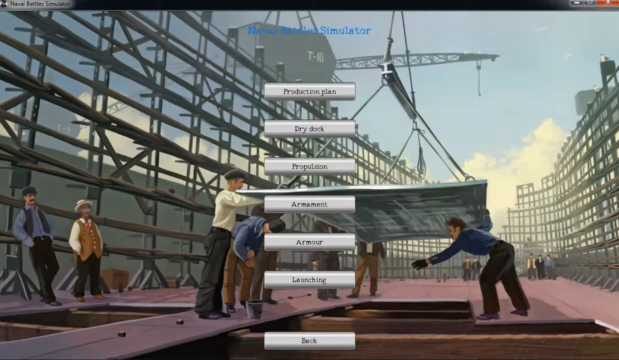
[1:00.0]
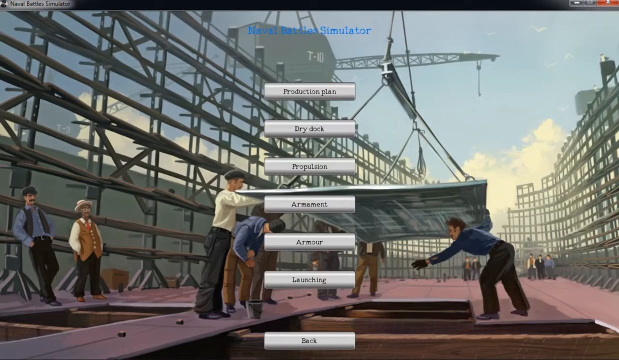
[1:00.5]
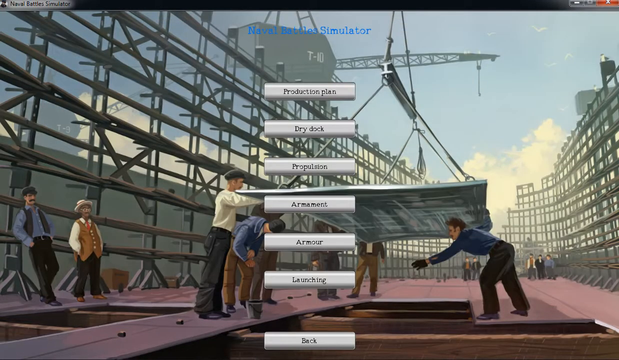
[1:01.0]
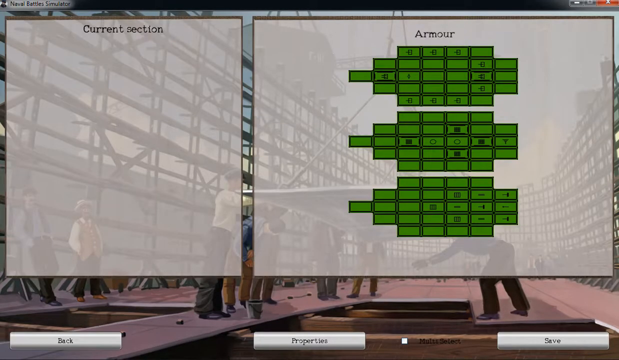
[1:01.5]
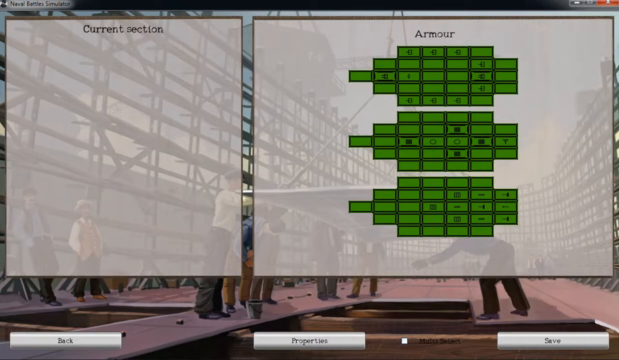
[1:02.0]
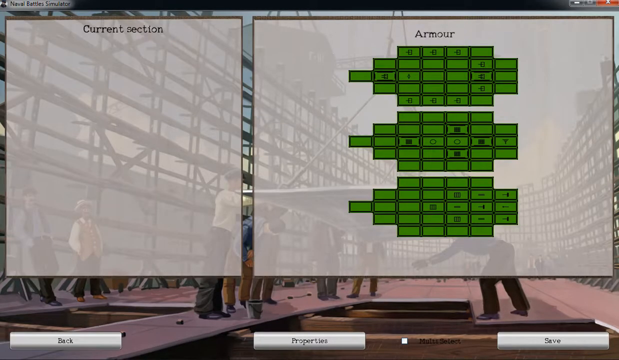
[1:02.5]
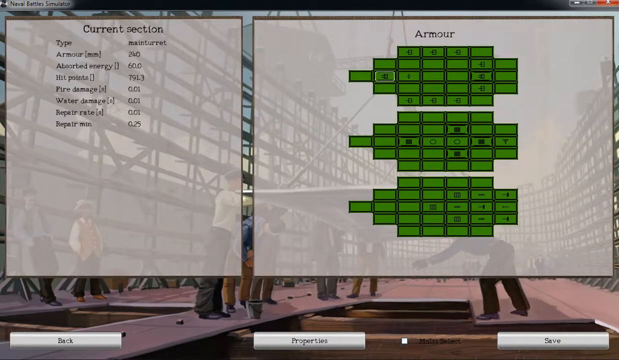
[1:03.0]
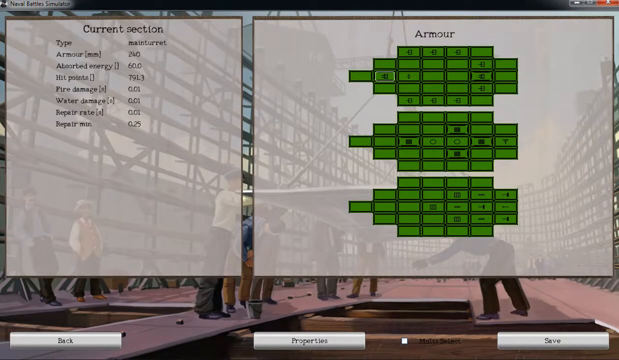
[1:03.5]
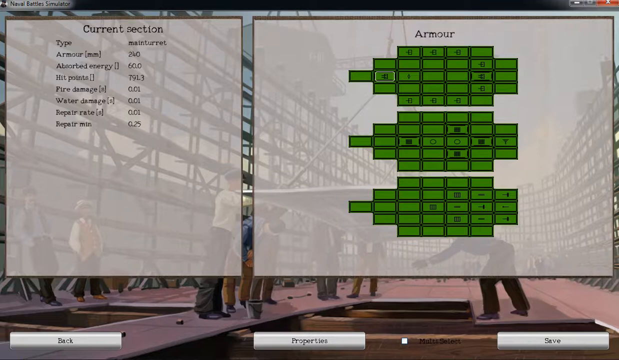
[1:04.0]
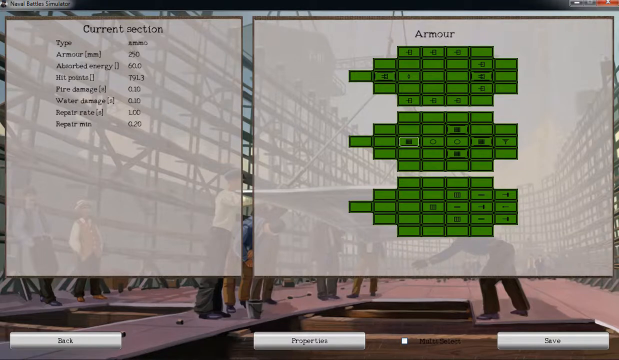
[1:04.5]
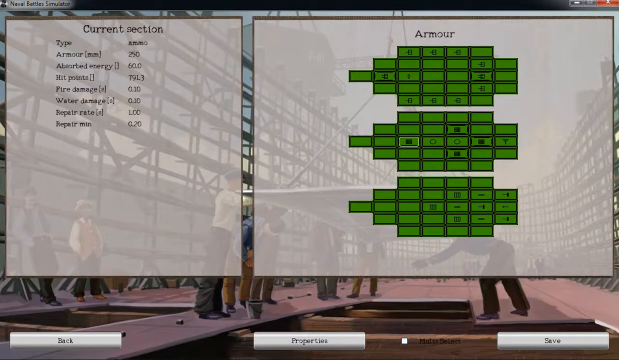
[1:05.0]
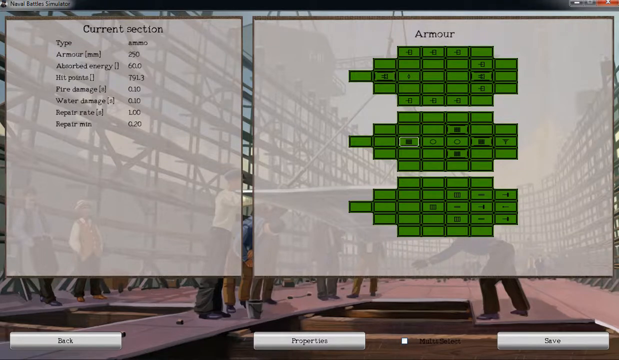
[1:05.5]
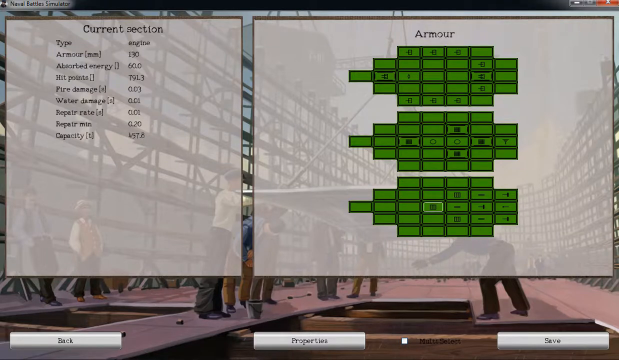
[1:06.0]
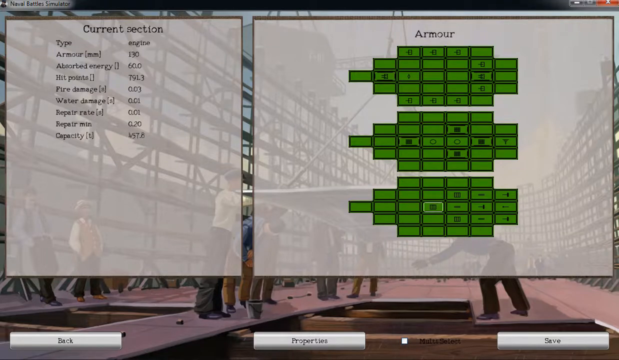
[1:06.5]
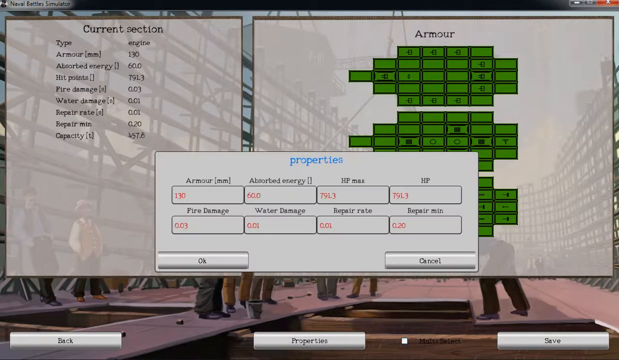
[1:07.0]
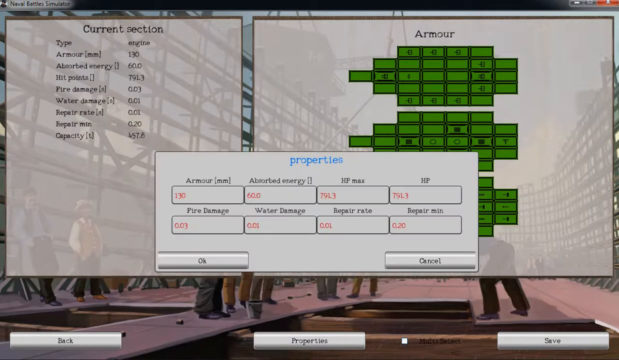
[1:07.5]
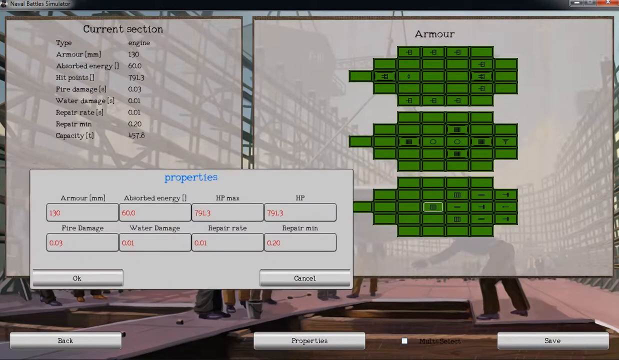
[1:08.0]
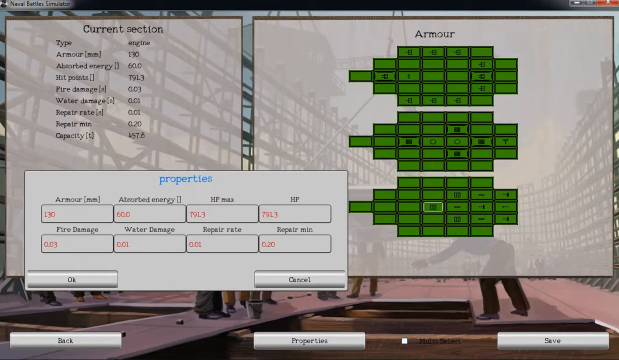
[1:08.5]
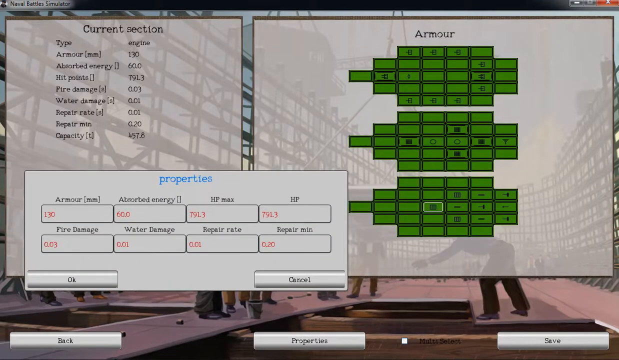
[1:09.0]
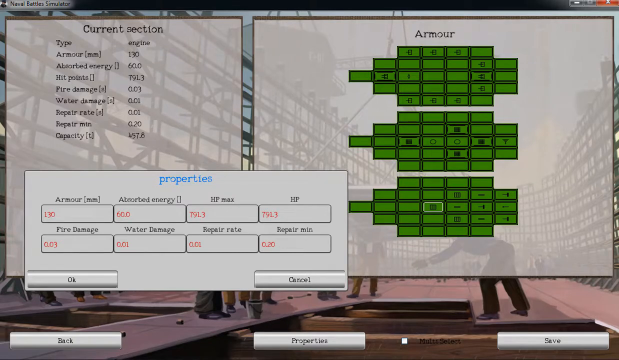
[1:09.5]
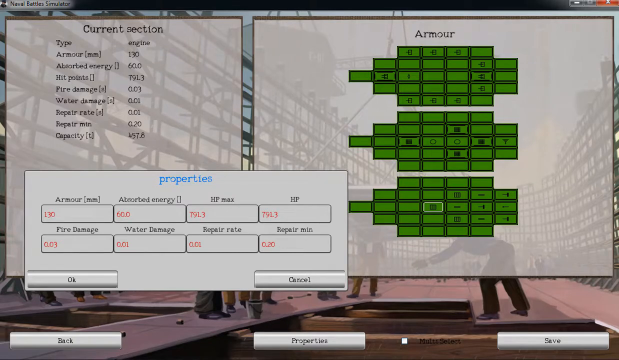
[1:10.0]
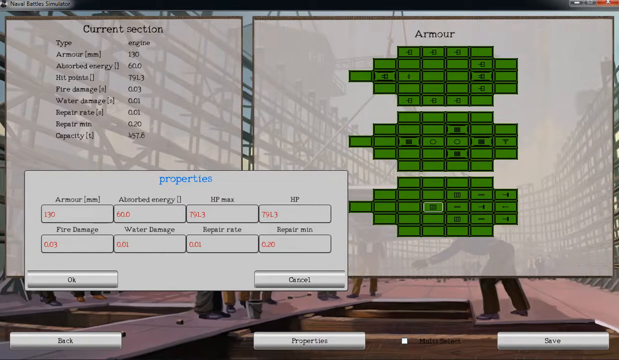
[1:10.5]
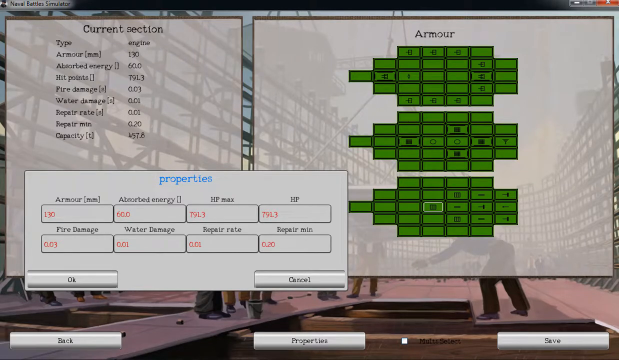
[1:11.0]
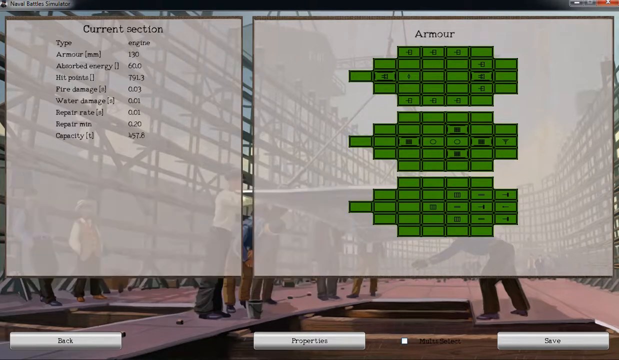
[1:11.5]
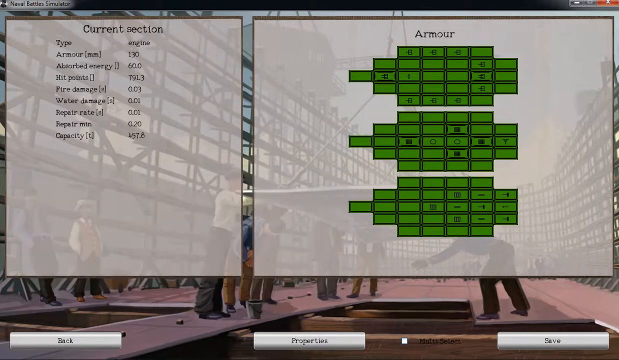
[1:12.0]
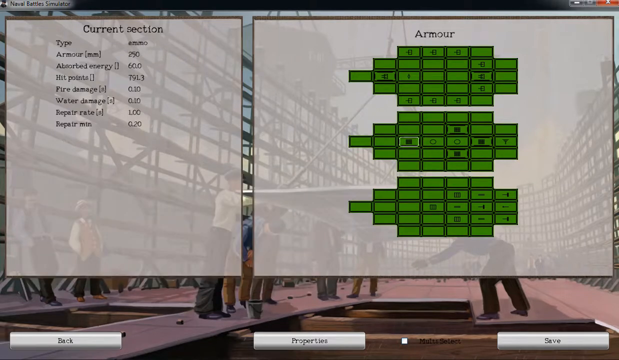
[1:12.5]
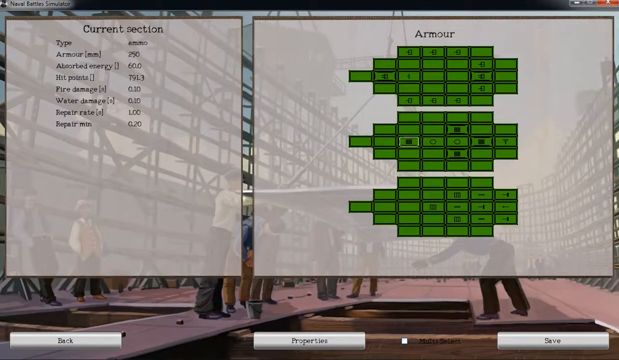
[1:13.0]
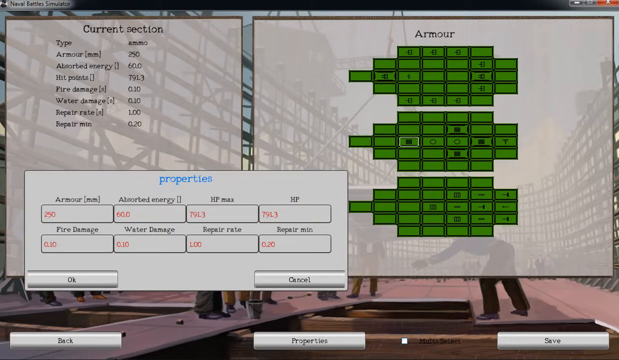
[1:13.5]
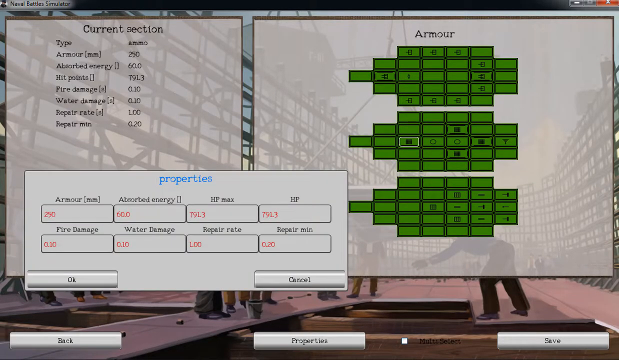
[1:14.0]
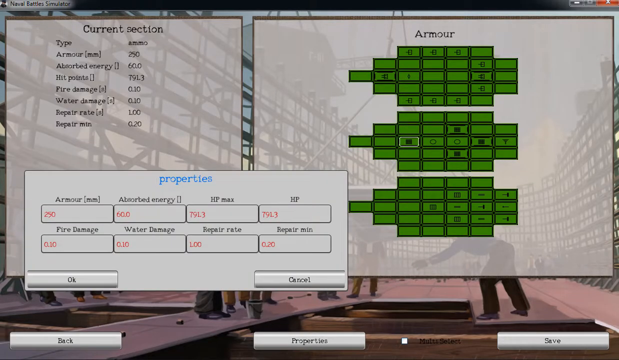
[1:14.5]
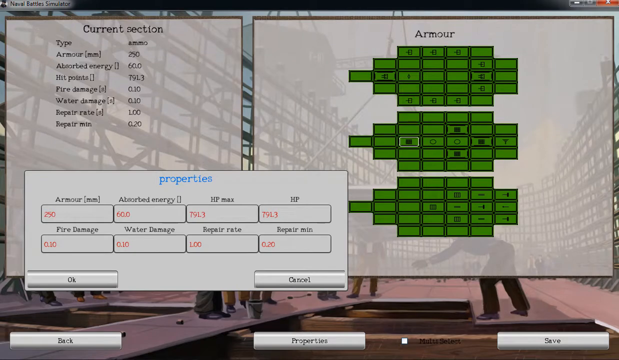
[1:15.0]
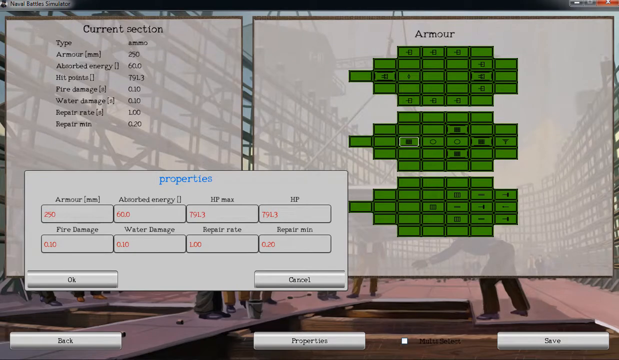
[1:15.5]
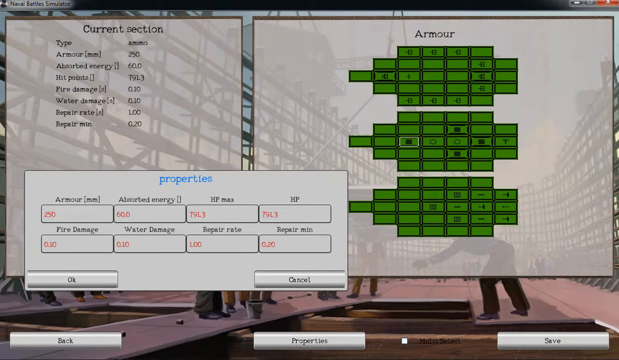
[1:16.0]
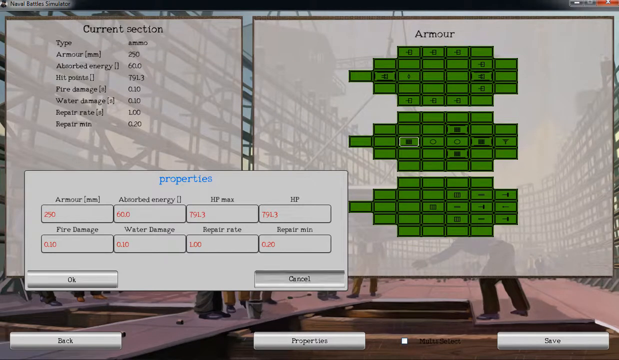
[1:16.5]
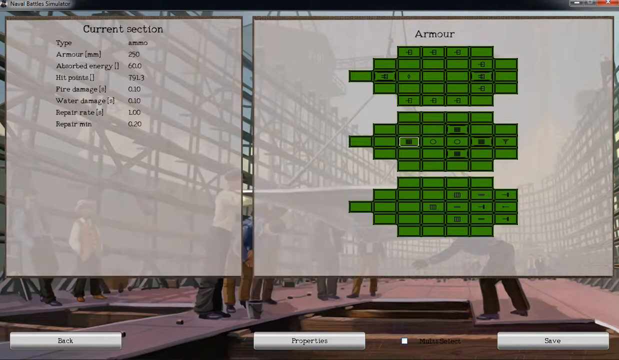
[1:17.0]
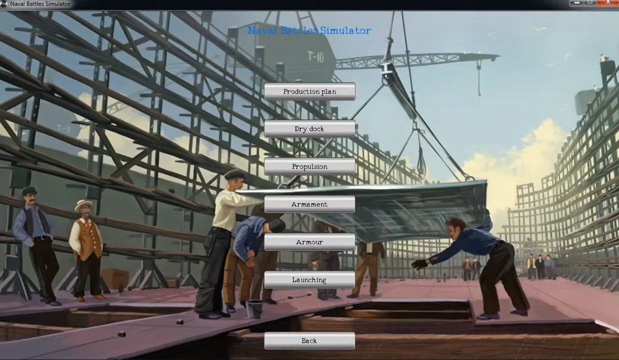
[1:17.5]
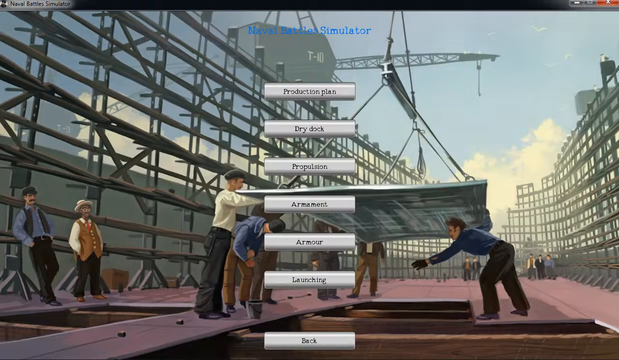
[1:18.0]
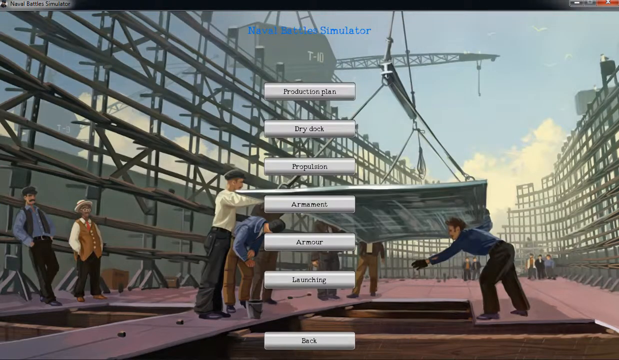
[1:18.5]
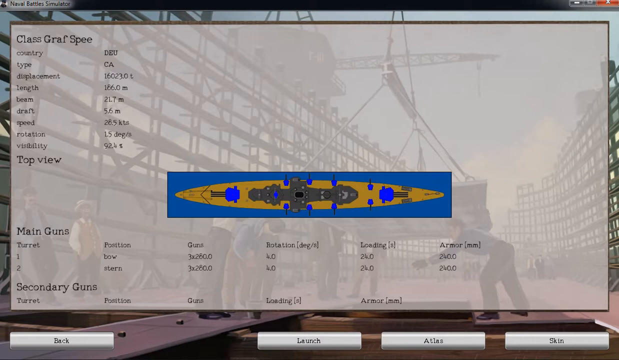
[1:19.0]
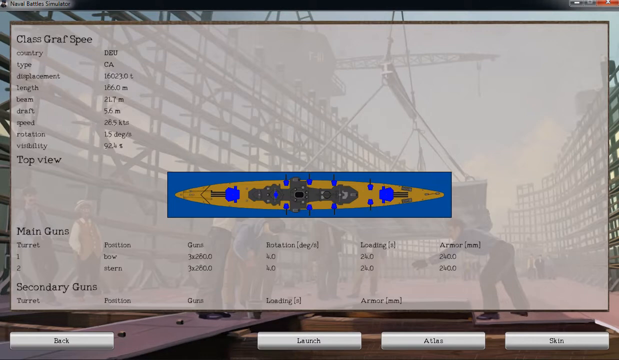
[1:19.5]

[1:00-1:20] A white screen shows very big blocks of small green rectangular shapes. They look like little pieces of money, but they could be the outline of a boat, a boat blueprint. They are on an off-white background, with a big rectangular box to the left and one to the right, with black letters written in the box. The person moves the mouse all around the screen. A big gray box comes up with red letters, eight little rectangular boxes, and blue words at the top that say "properties." In the background are seven men working on the boat on a very bright day. The rectangular boxes say "current section," "color," "type," and "armor."